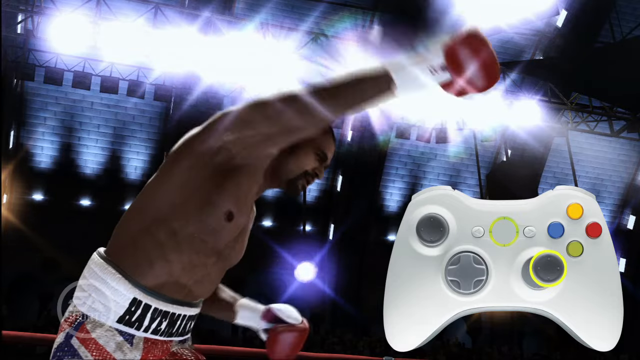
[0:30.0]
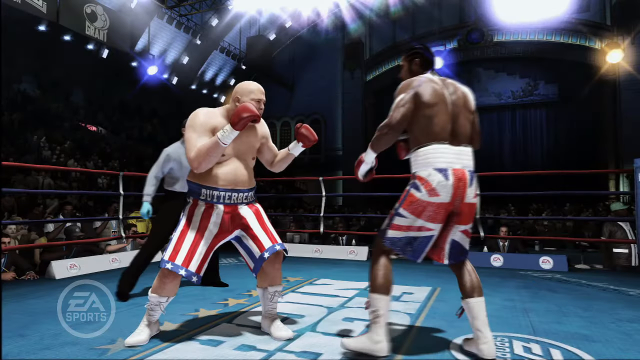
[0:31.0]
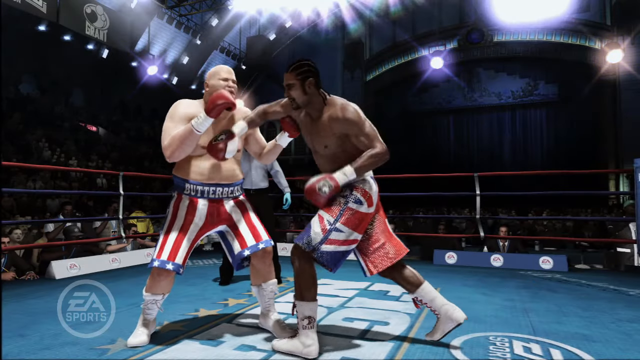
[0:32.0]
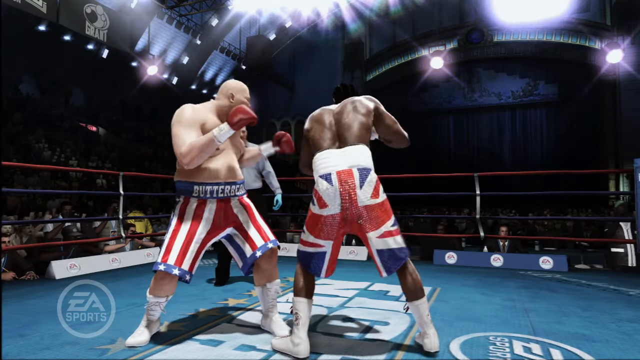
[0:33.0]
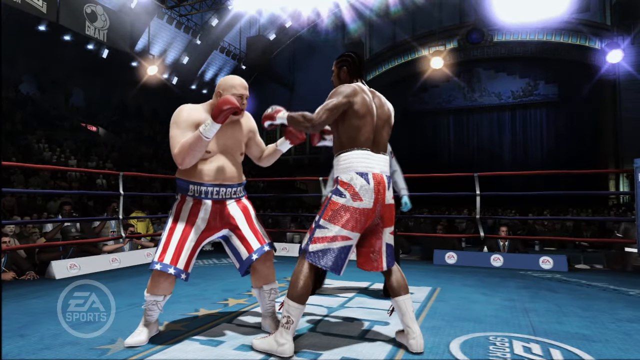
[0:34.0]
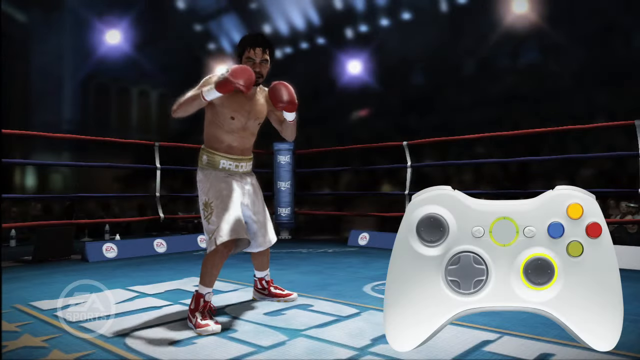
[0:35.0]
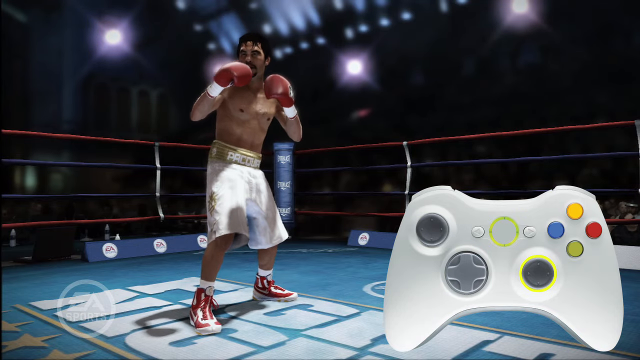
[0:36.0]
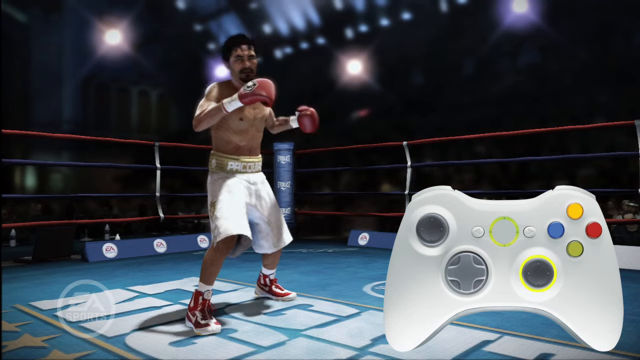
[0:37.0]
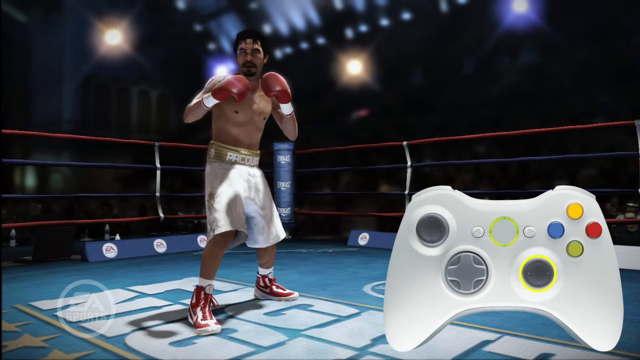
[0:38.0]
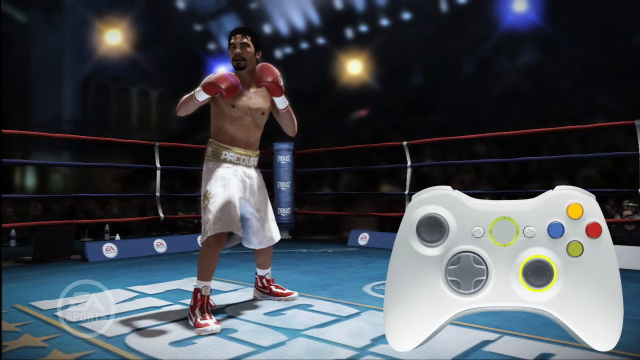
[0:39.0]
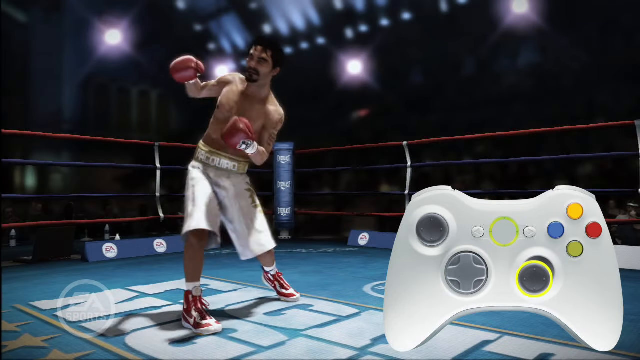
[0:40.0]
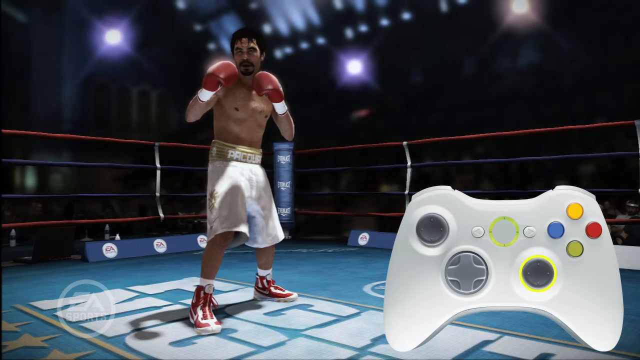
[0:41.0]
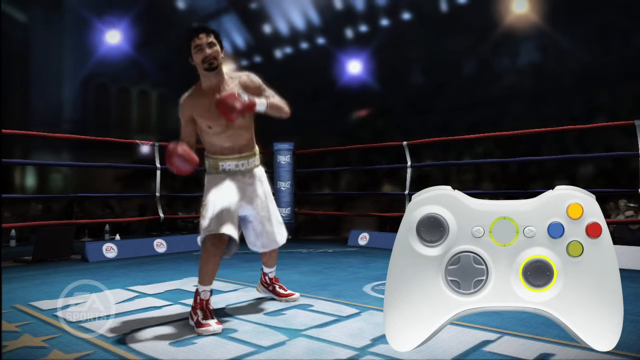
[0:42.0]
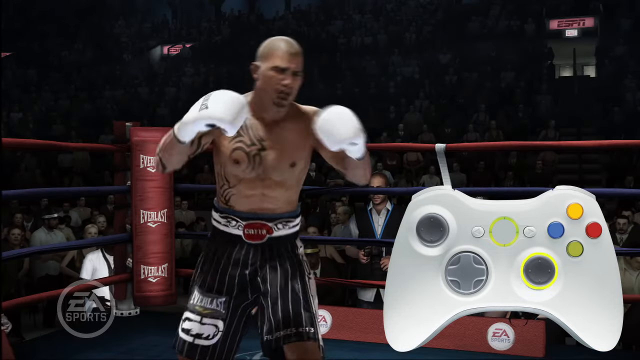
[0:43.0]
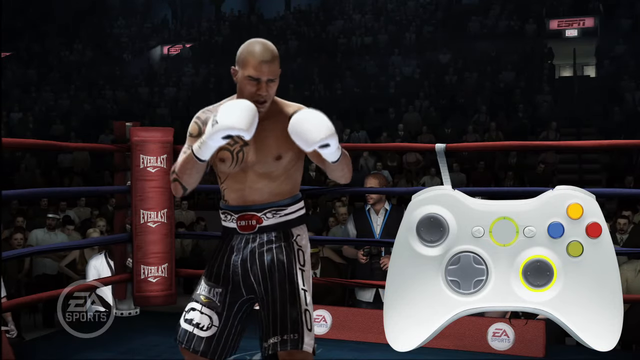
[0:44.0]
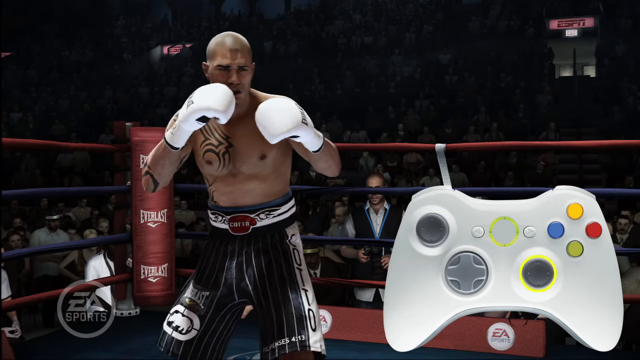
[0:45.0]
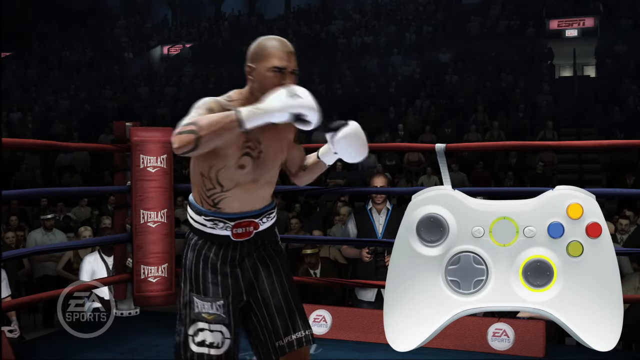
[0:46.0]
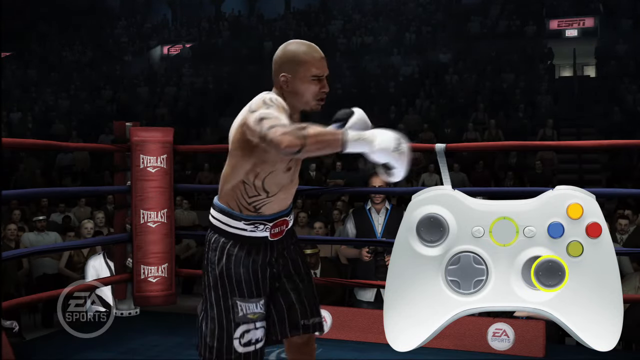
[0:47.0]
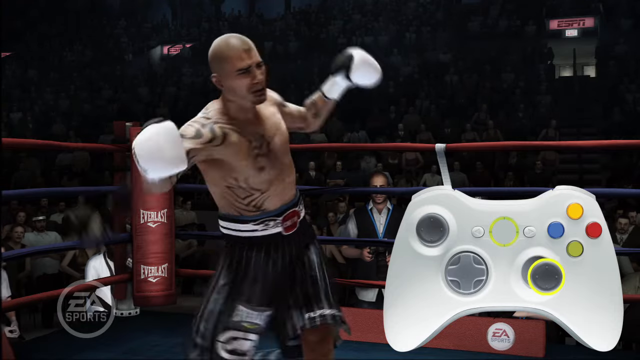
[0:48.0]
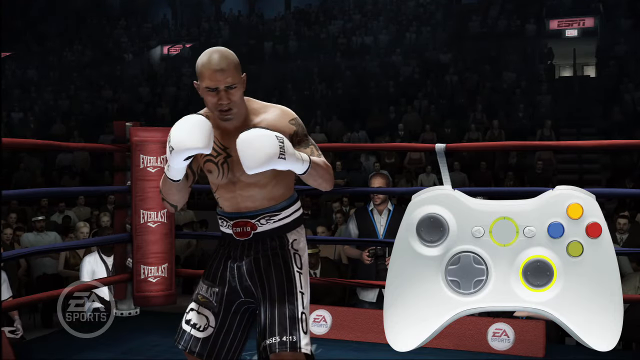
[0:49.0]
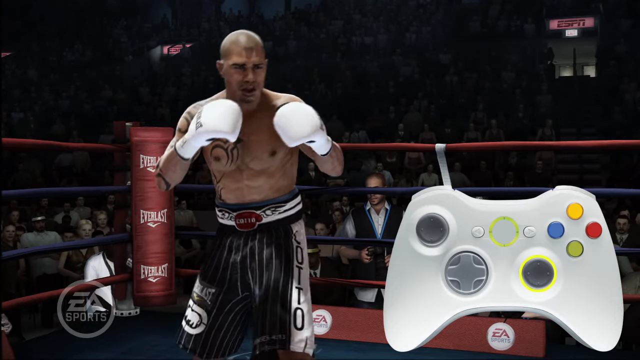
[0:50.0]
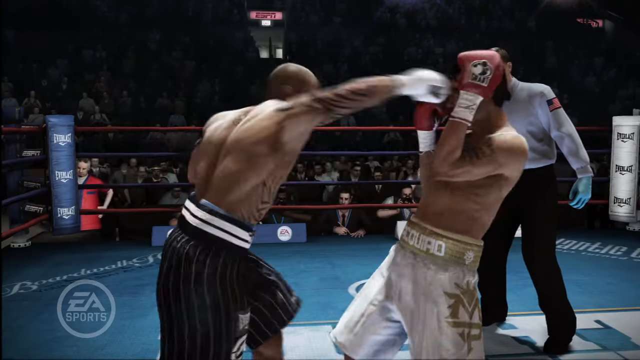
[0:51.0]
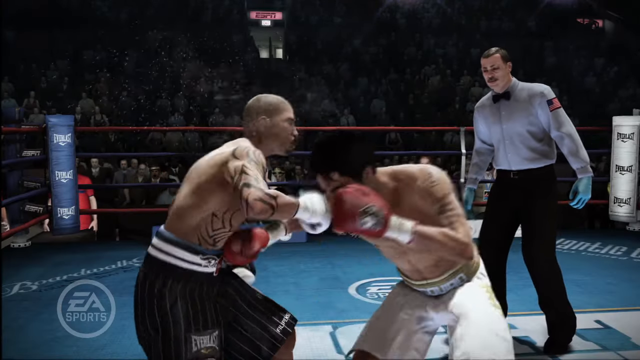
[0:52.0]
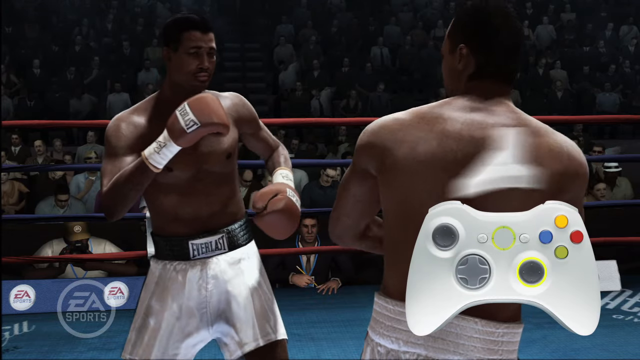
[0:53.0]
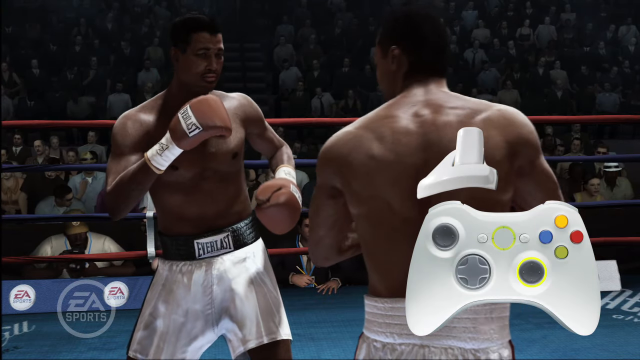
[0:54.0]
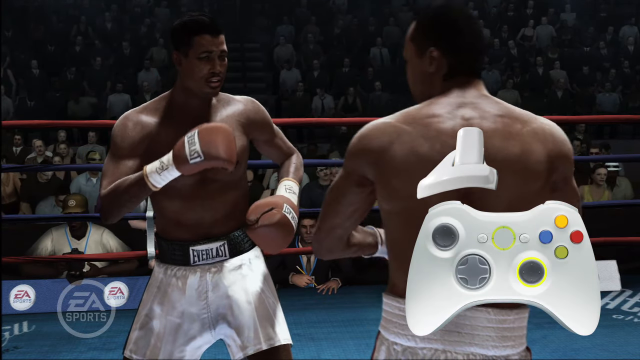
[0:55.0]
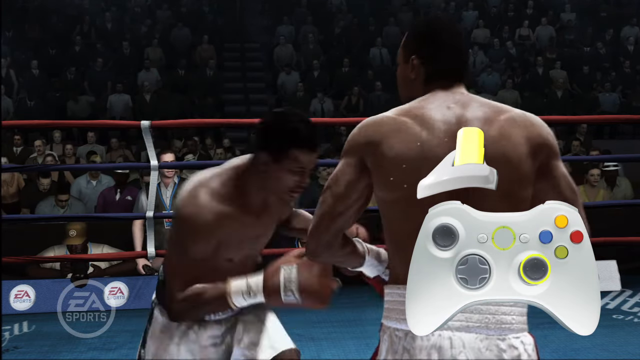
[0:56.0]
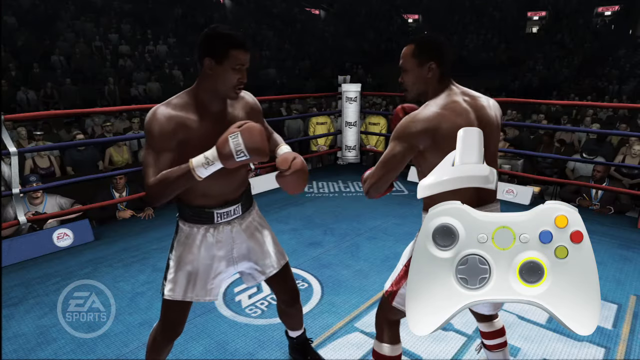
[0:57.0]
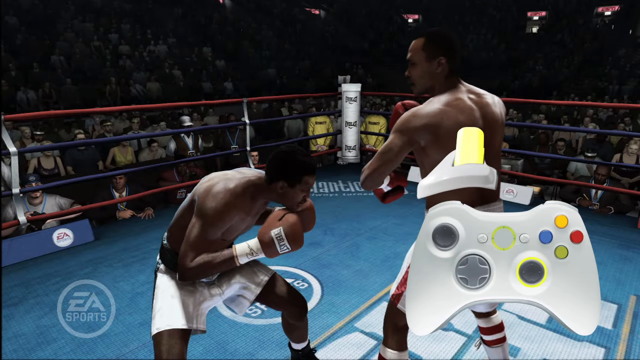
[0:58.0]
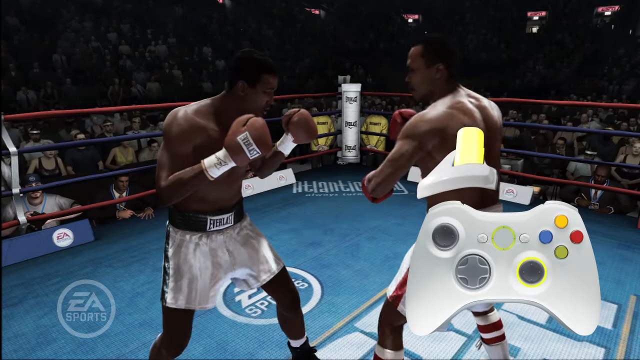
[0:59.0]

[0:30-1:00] The analog stick keeps moving in various directions, showing the moves that can be made. A different pair of men then fights. The one on the left is white and a bit heavier set, wearing red and white striped pants with a blue striped bottom half and stars, looking like the American flag; the logo around his waist says "Butterbean". The man on the right is a bit slimmer and black, wearing what looks like the British flag as pants, in red, white and blue. Another boxer appears in white pants with a small logo on either side and red and white shoes, while the Xbox controller again displays the various moves. Another boxer follows, wearing black pants with white stripes and white boxing gloves, with tattoos running up the right side of his chest and onto his arm. Punches are thrown all the while, and the controller shows how to make the moves. Another pair of men, one black and one Asian, enter the scene and box each other.